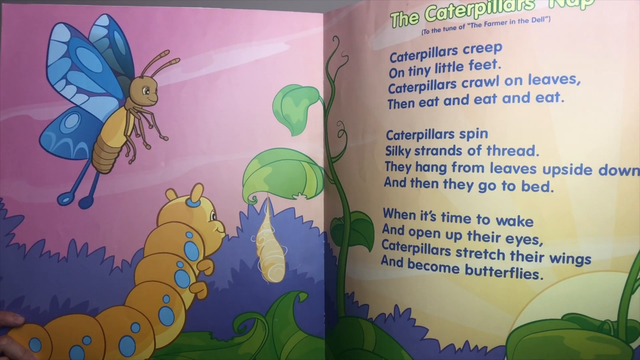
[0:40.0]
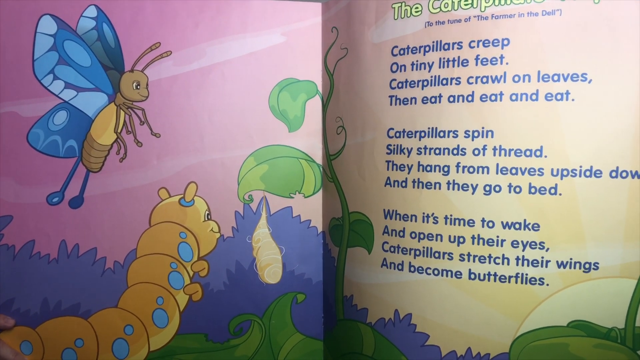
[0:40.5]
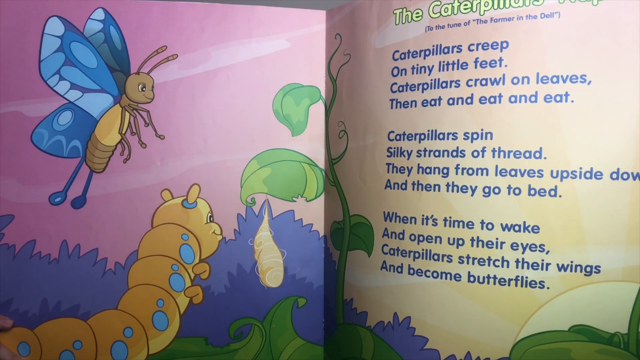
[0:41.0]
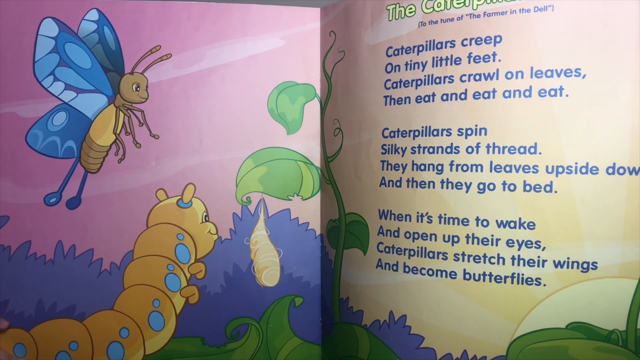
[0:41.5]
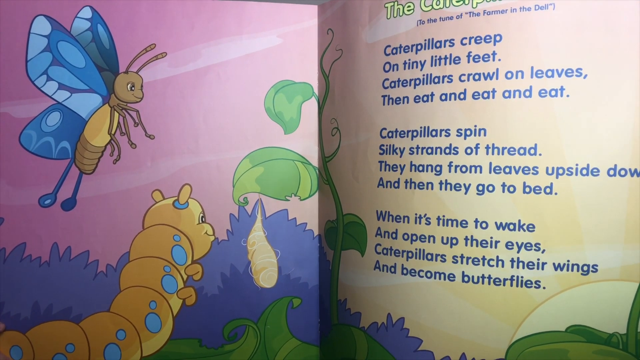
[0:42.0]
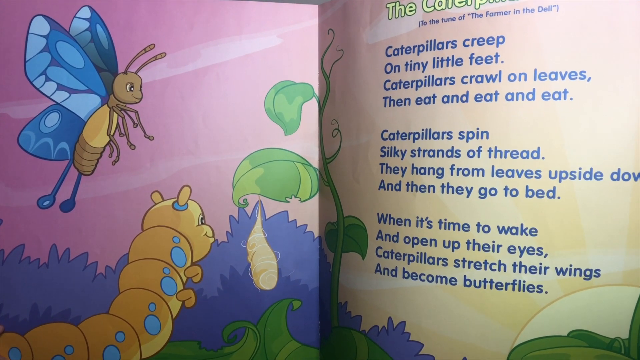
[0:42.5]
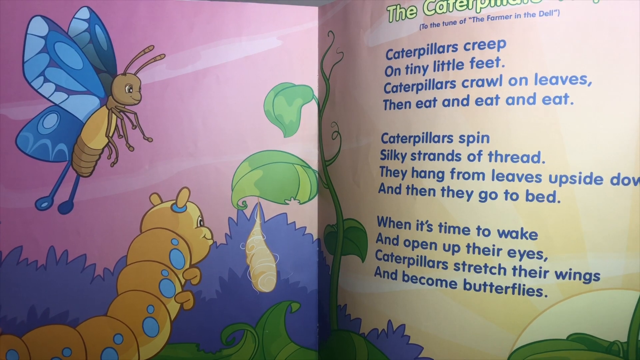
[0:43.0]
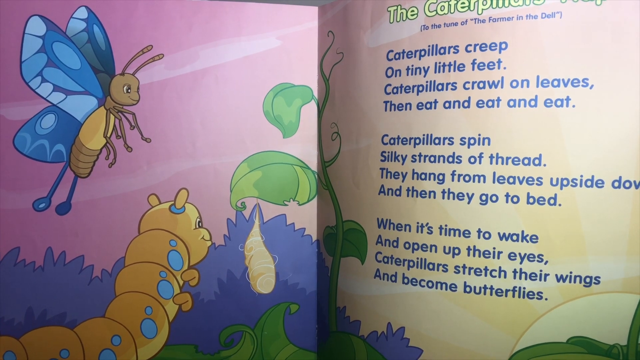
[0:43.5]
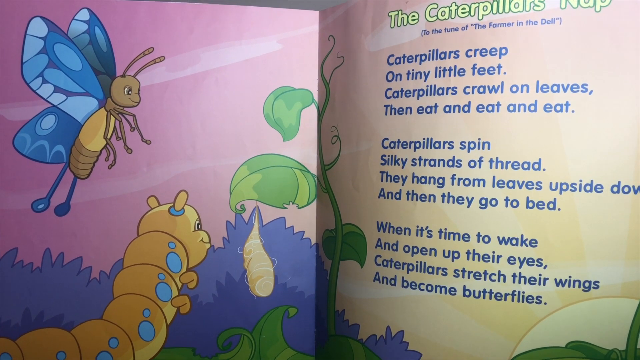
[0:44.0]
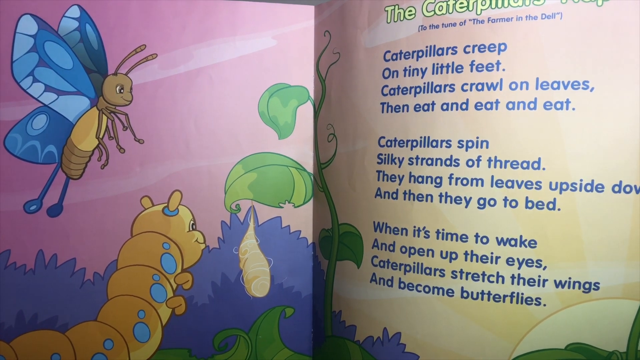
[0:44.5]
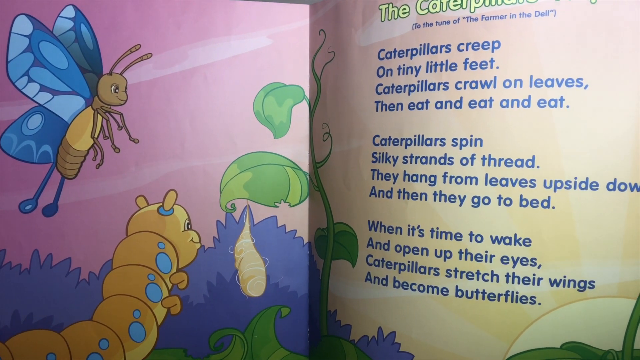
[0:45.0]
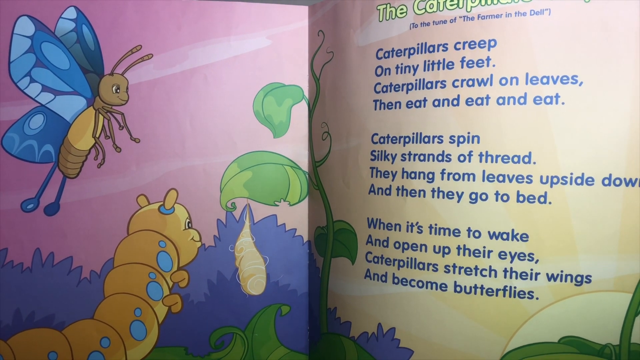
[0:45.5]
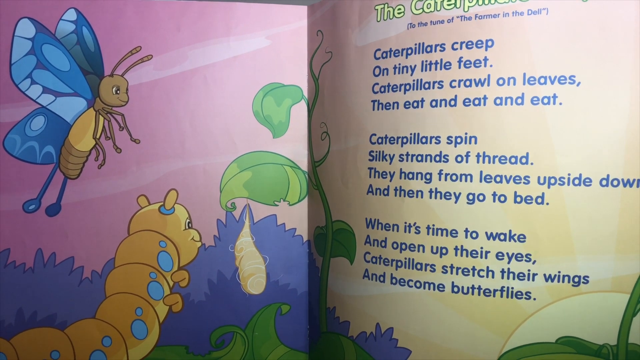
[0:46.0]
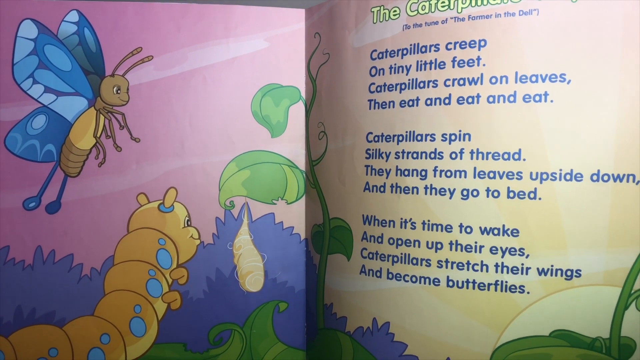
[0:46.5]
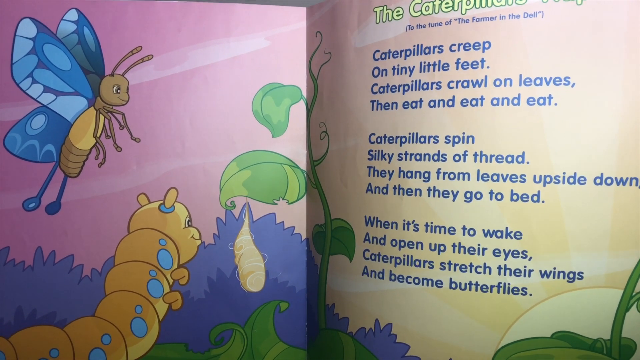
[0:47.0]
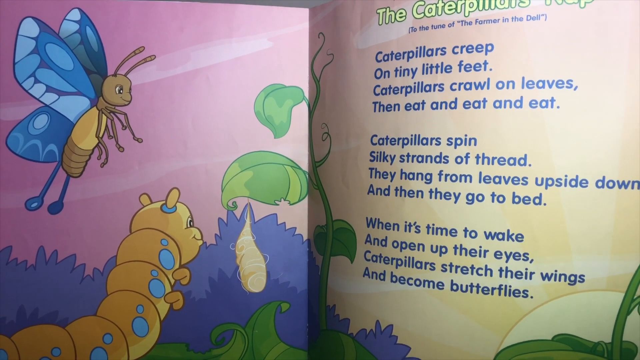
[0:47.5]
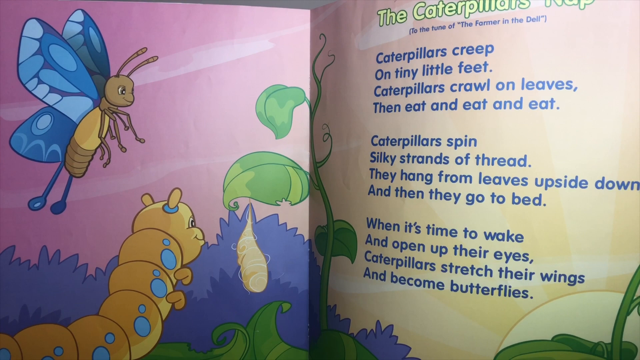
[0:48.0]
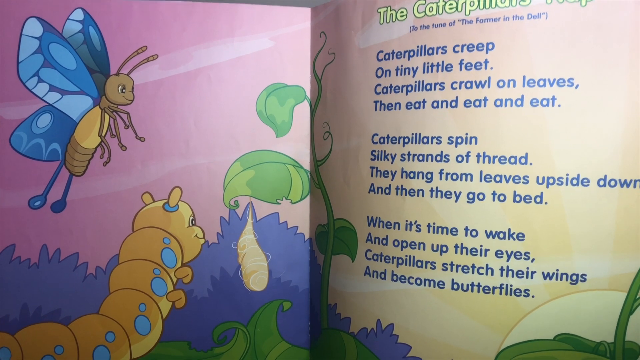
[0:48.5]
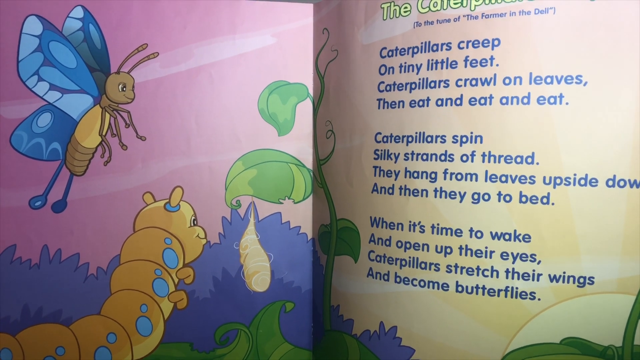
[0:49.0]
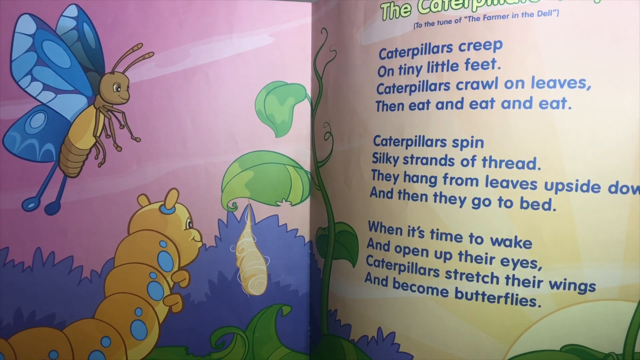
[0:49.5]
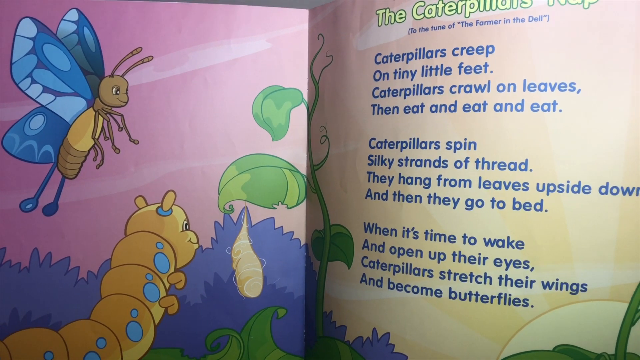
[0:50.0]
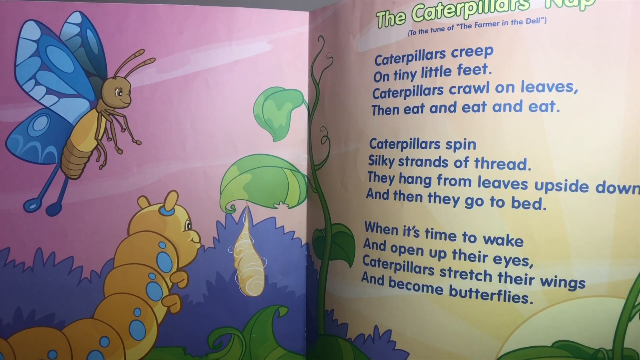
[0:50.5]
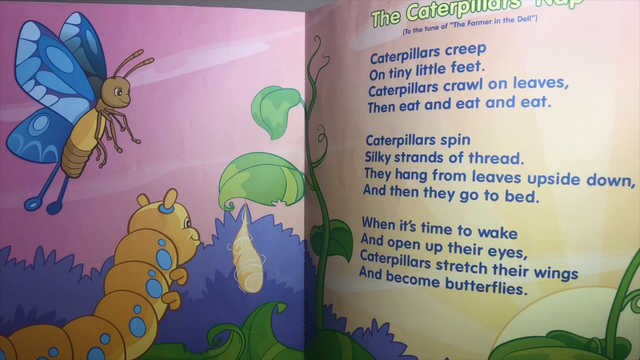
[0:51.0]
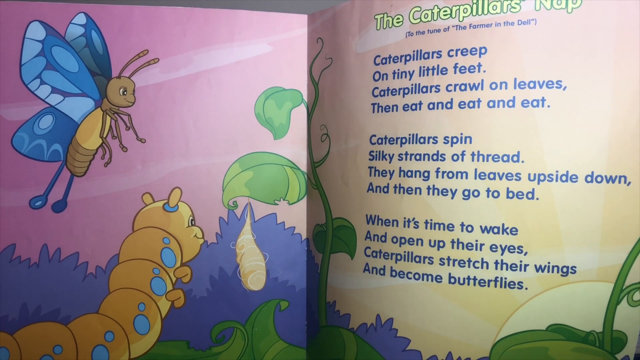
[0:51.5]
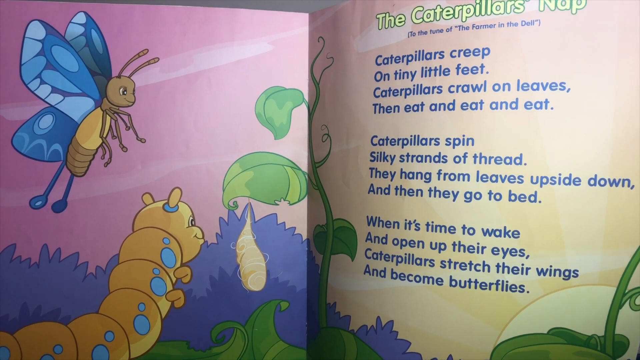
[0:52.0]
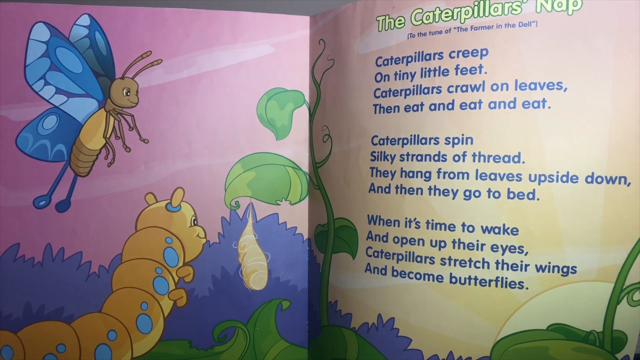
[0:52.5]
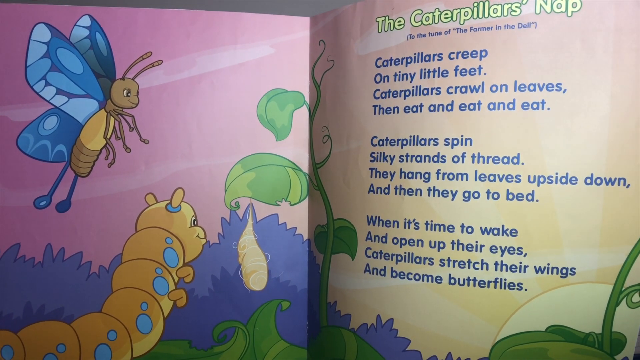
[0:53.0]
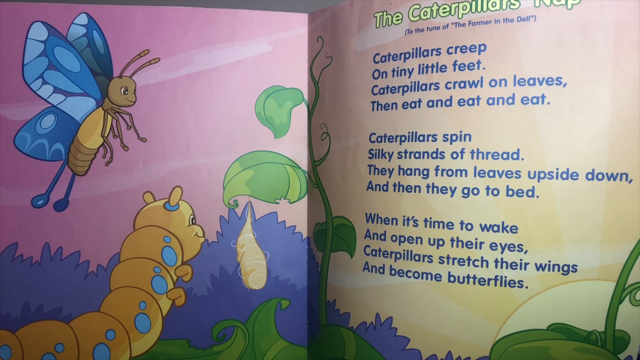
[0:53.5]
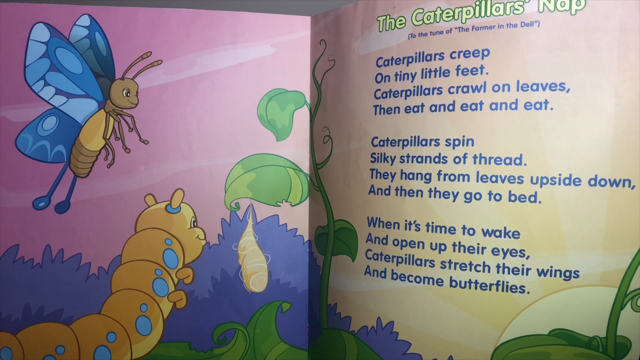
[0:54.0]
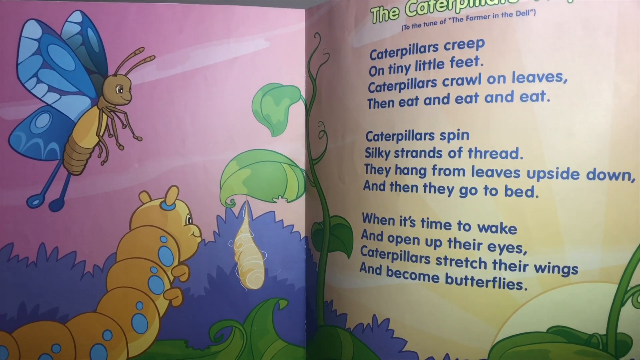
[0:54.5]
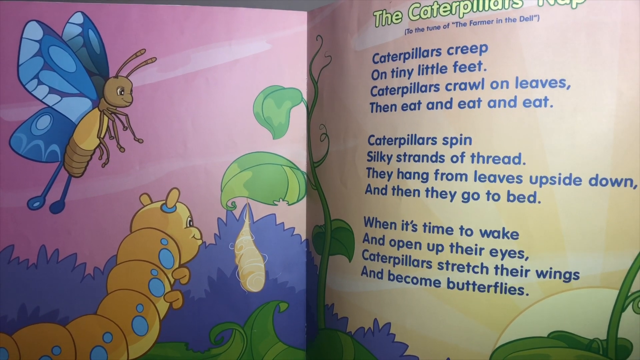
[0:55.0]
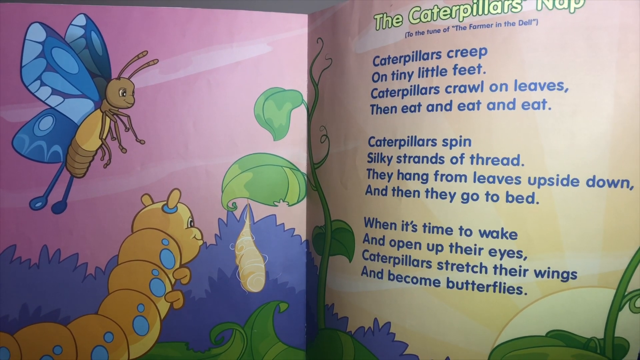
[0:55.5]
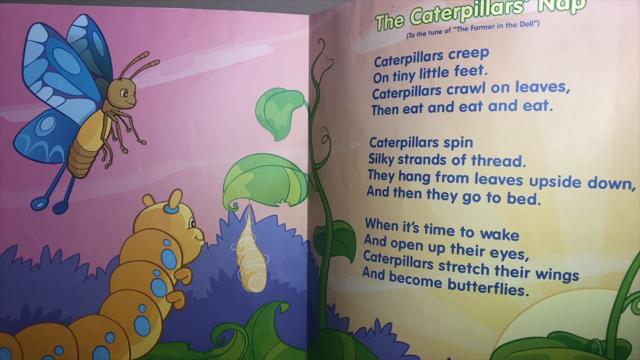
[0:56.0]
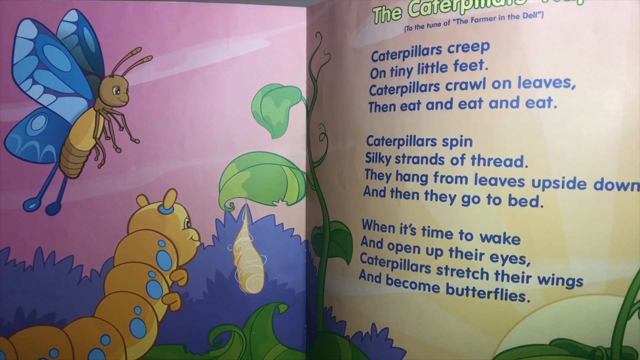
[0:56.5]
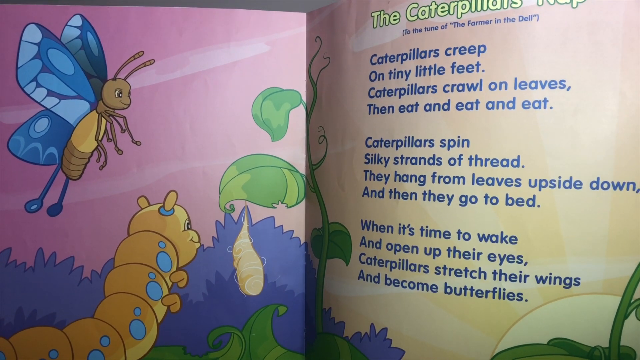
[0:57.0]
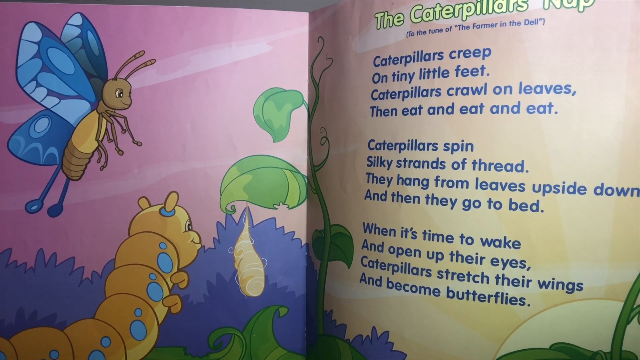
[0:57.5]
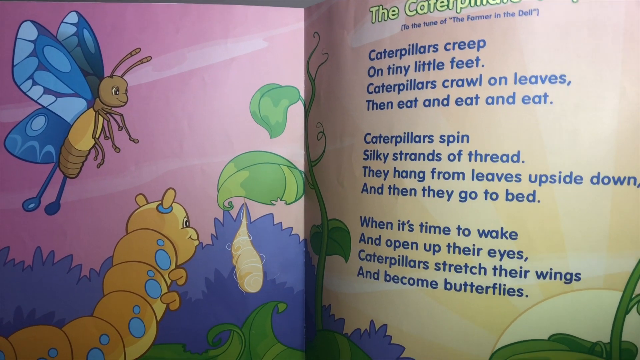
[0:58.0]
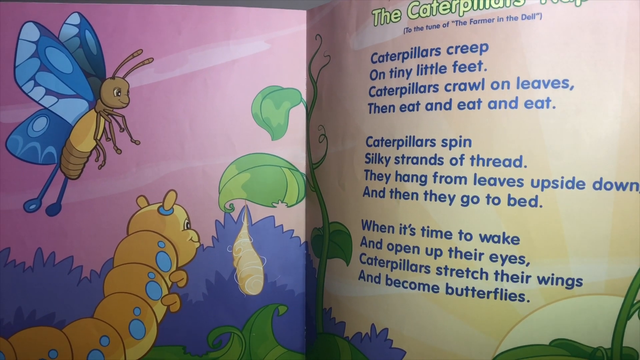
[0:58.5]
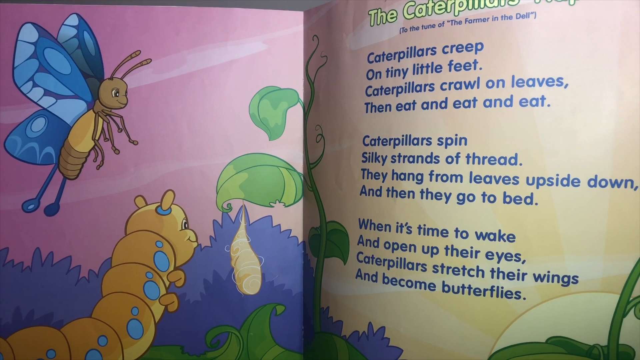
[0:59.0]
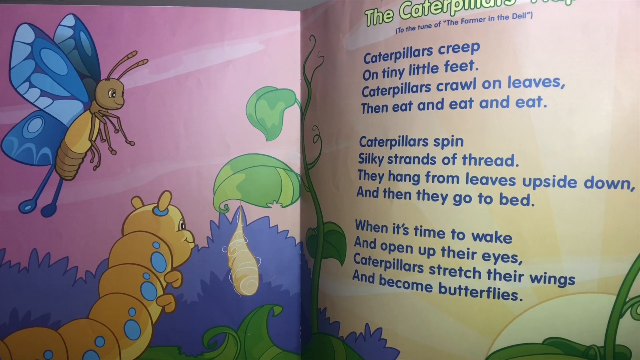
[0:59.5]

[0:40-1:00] The same page of the book is shown, presumably while she reads the caterpillar song, which is set to the tune of The Farmer in the Deli. The book has nice, very cartoonish illustrations with a pink background, showing a caterpillar, a plant, the chrysalis and a butterfly, likely depicting the stages of a butterfly's life. In the background there is a sunrise or possibly a sunset, with a round yellow shape in the corner. There is a purple bush on the pink side of the book.